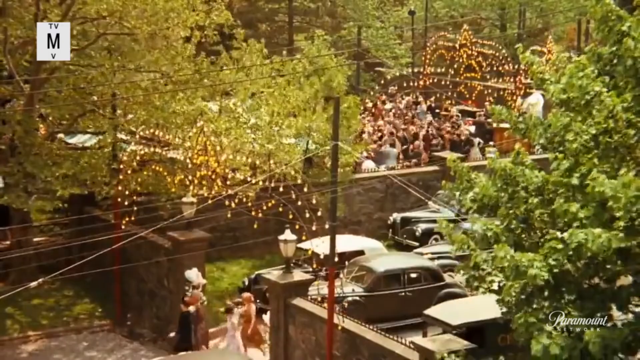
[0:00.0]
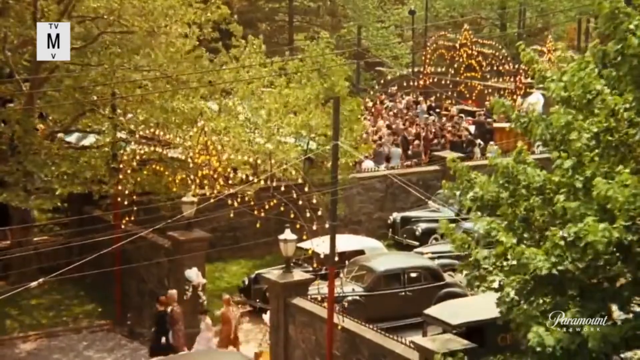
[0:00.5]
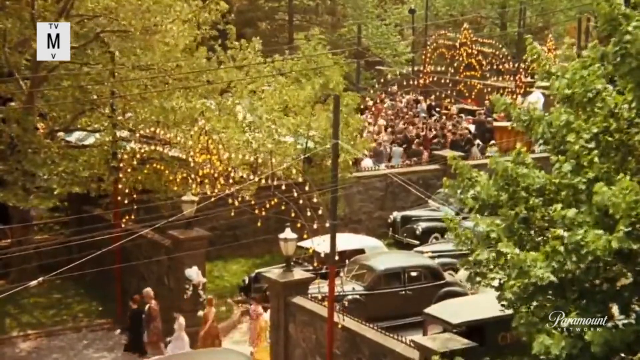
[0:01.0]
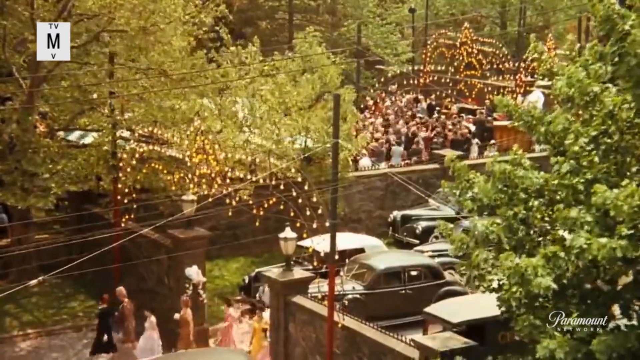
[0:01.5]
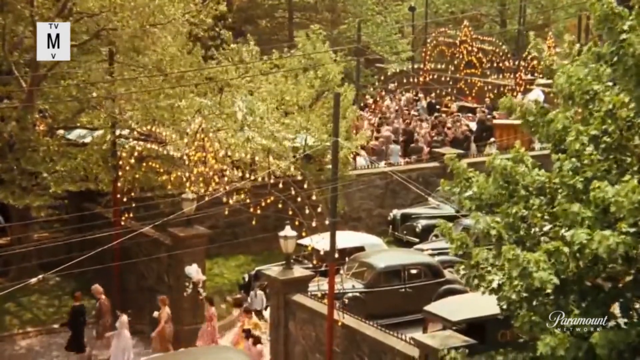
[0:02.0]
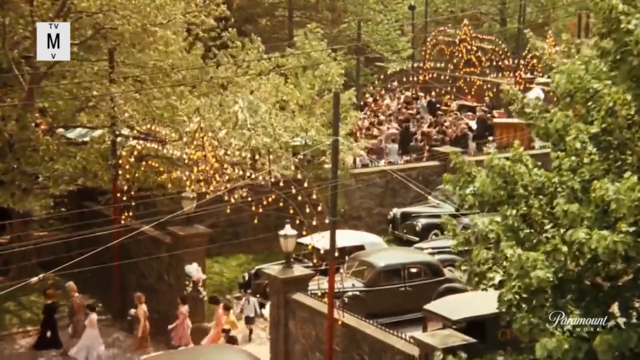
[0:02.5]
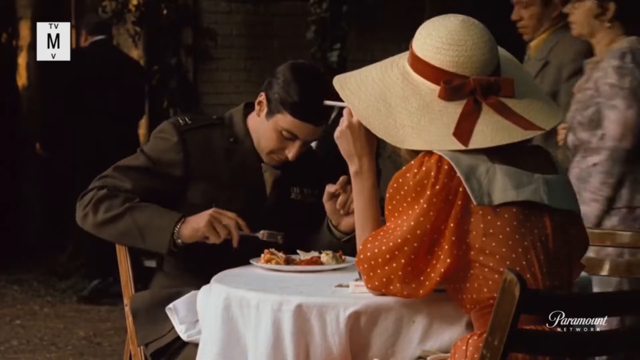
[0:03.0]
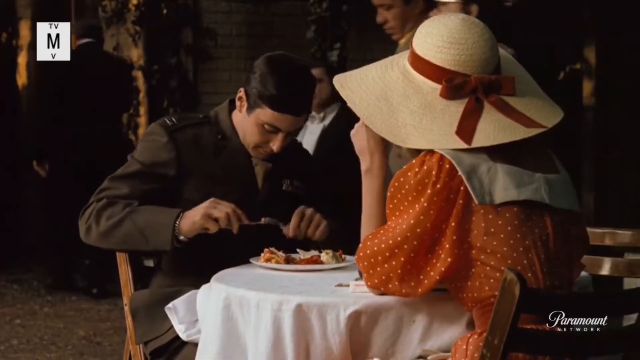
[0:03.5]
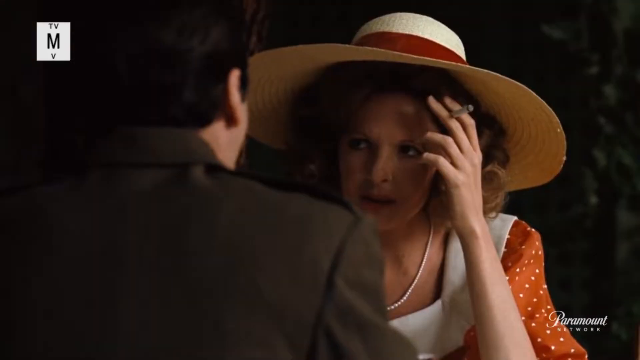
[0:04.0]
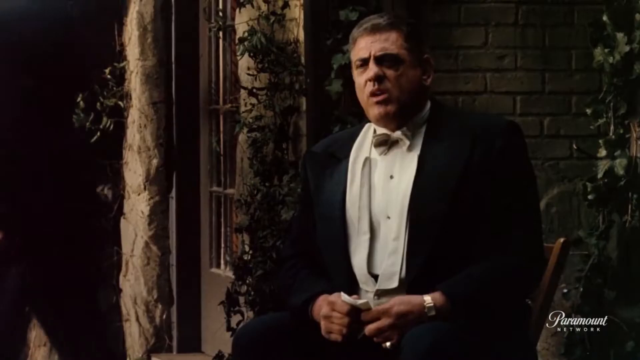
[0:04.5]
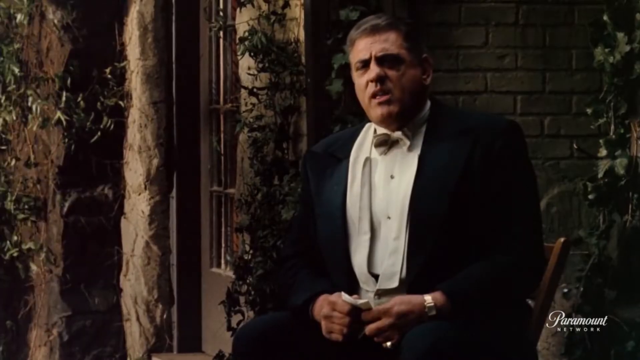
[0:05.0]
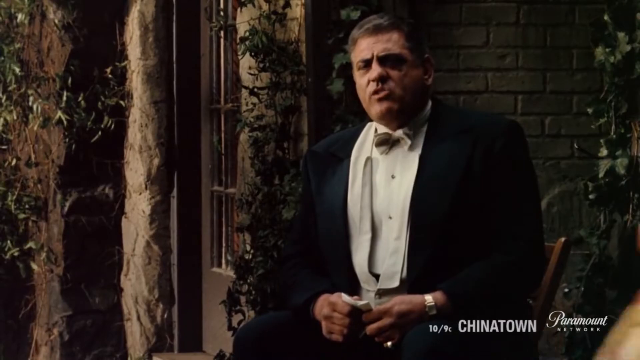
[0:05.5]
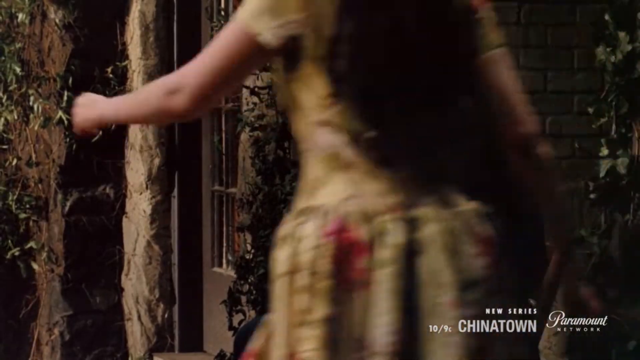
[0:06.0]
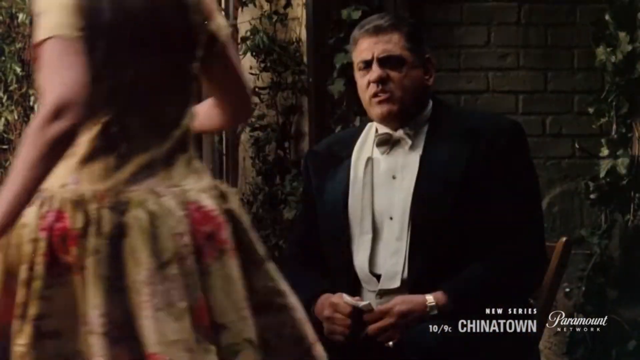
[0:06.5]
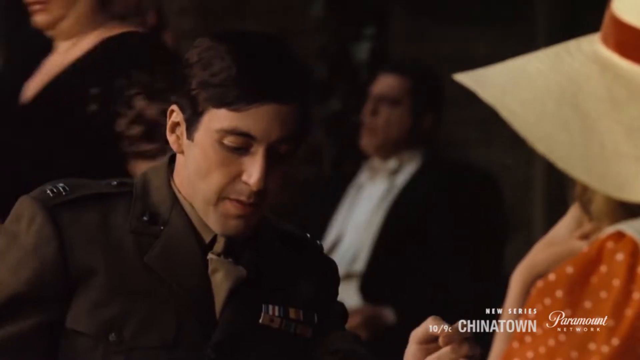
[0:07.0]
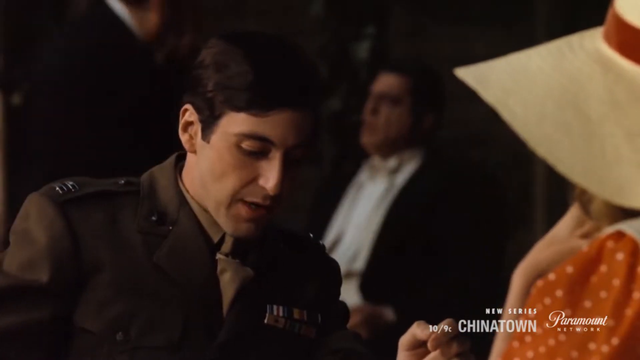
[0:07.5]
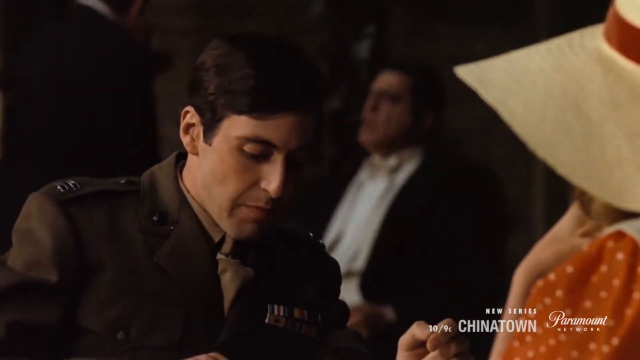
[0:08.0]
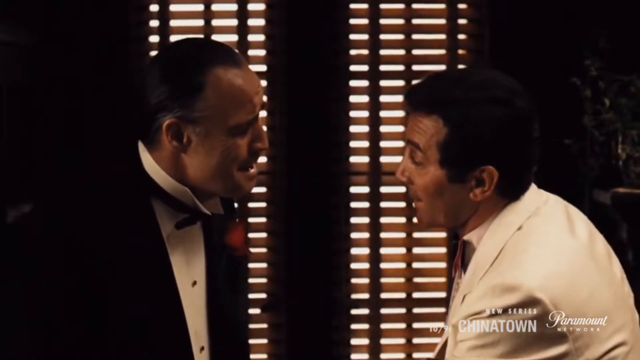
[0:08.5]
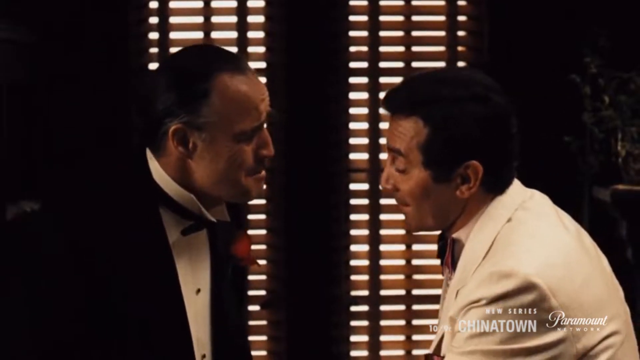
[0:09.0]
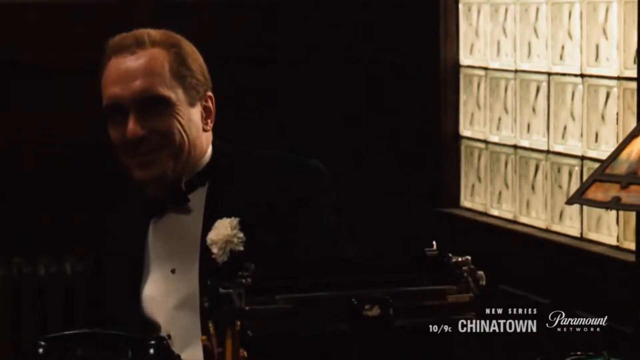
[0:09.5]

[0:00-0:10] The video, a movie scene or trailer, opens on a celebration ceremony. People dance, jump and shout, and there are parked vehicles, decorations and trees, with the name "TVMV" in the top left. The scene changes to a soldier sitting at a table and eating with a fork next to a lady at the same table; they converse while eating, and the lady smokes a cigarette. Another man in a suit talks to people, and then the soldier and the lady have a conversation.